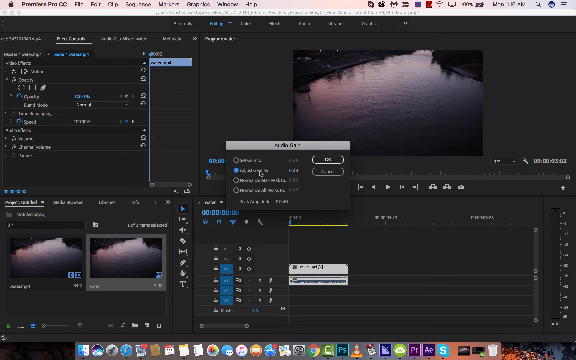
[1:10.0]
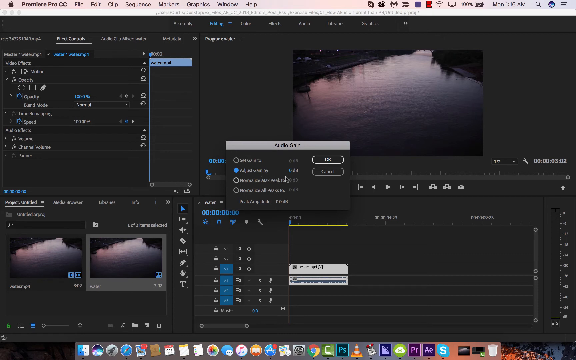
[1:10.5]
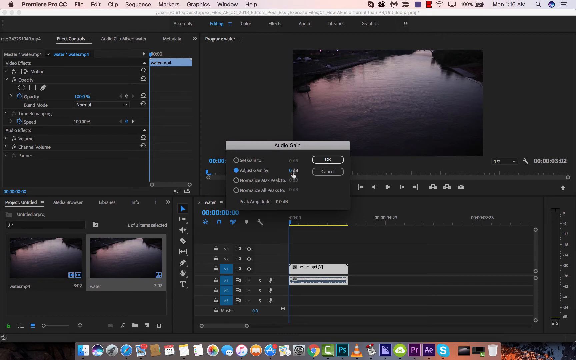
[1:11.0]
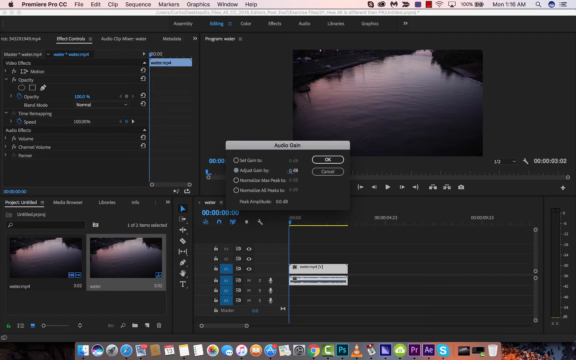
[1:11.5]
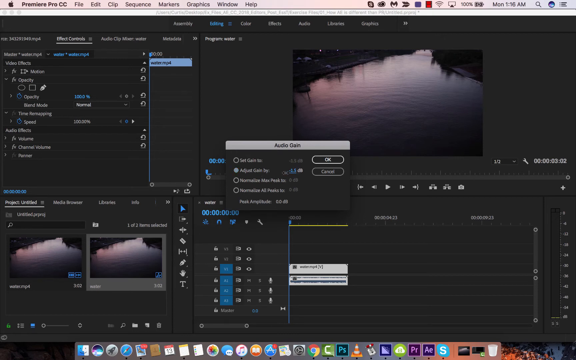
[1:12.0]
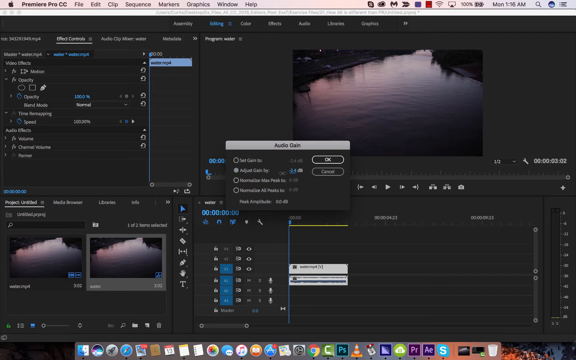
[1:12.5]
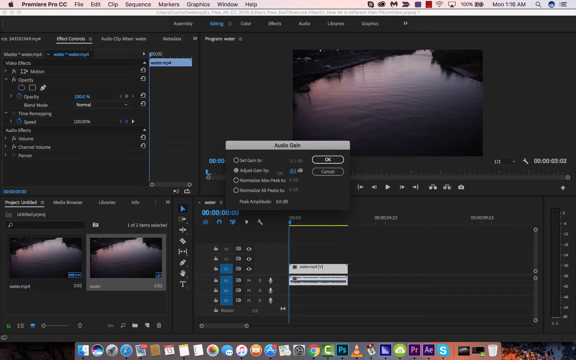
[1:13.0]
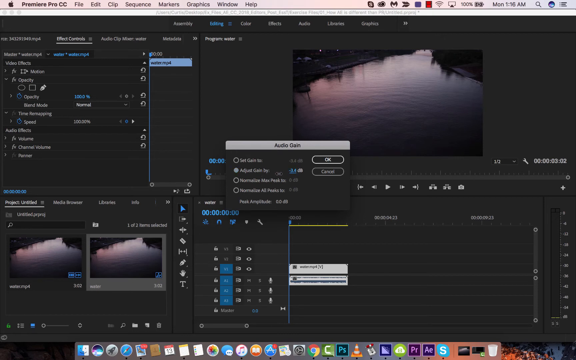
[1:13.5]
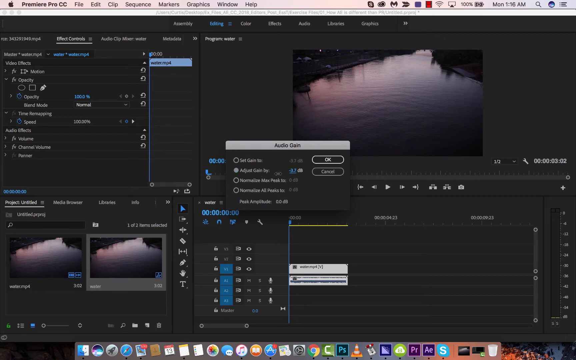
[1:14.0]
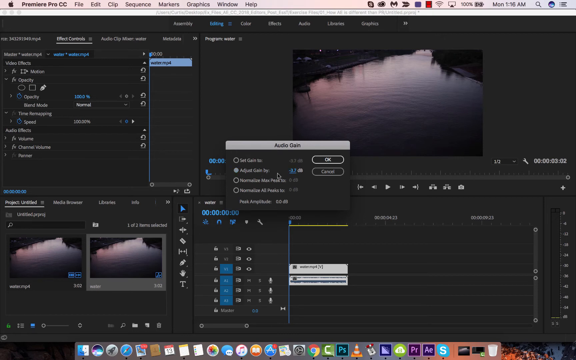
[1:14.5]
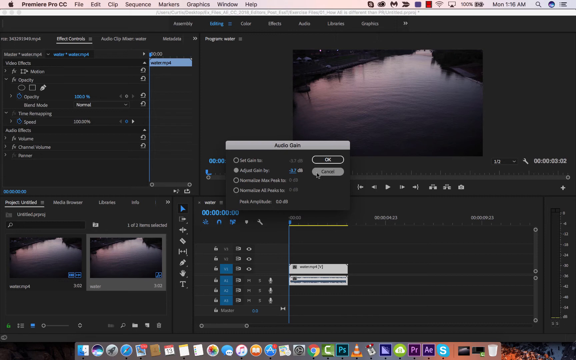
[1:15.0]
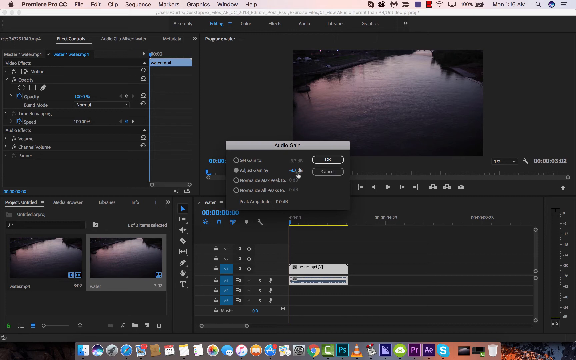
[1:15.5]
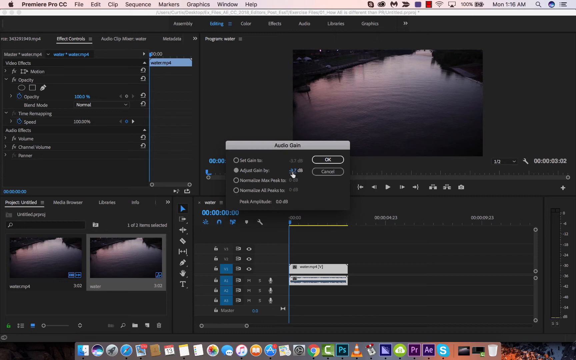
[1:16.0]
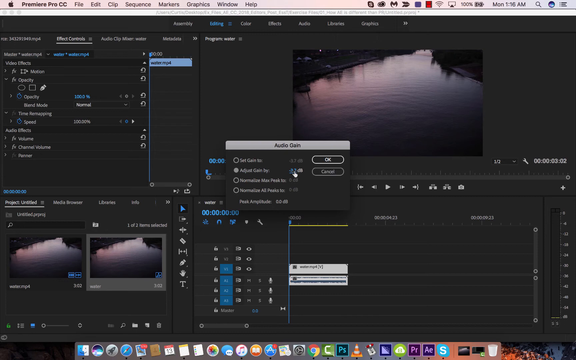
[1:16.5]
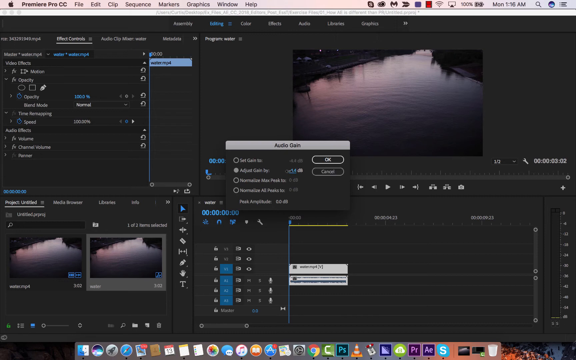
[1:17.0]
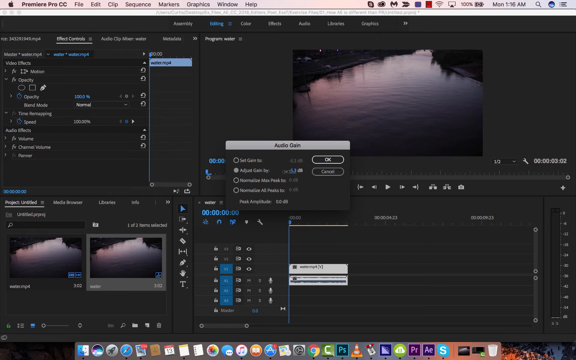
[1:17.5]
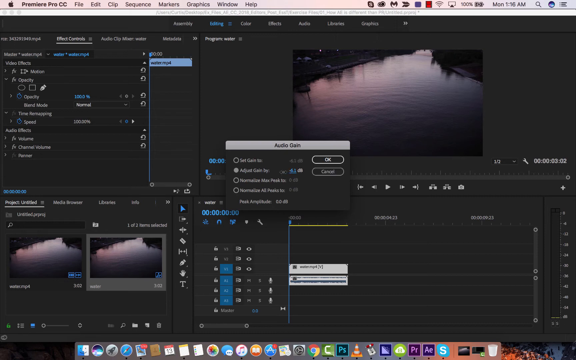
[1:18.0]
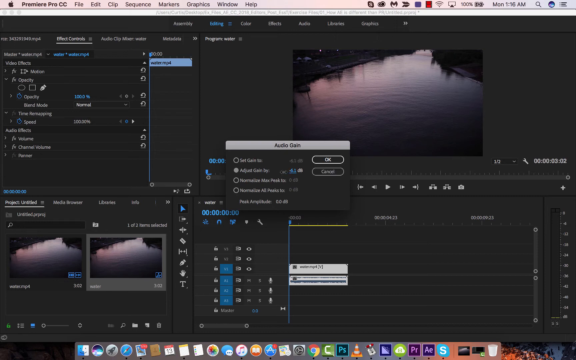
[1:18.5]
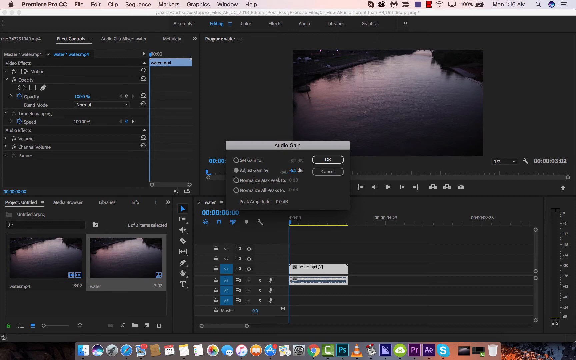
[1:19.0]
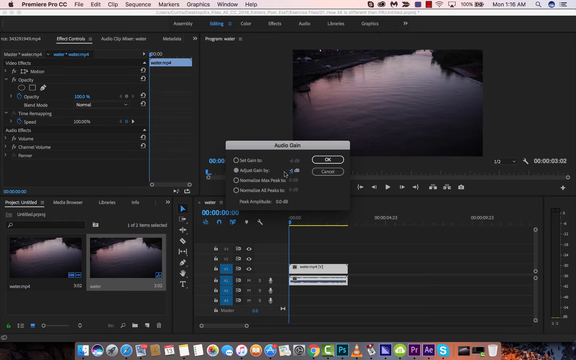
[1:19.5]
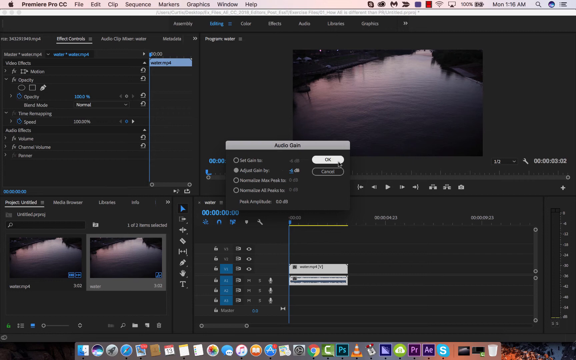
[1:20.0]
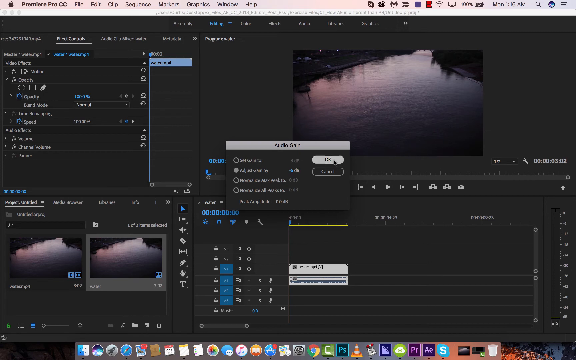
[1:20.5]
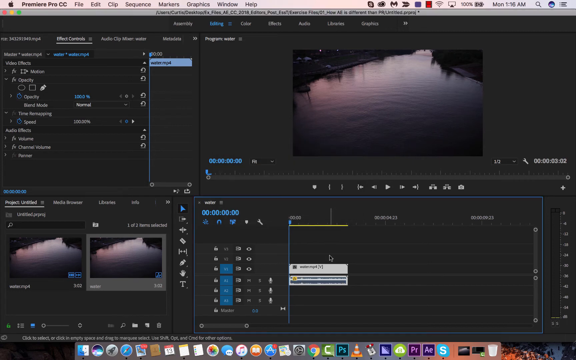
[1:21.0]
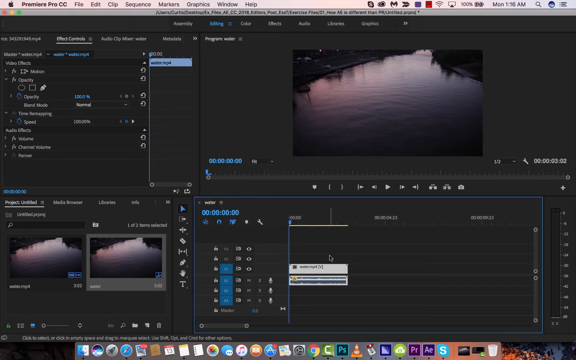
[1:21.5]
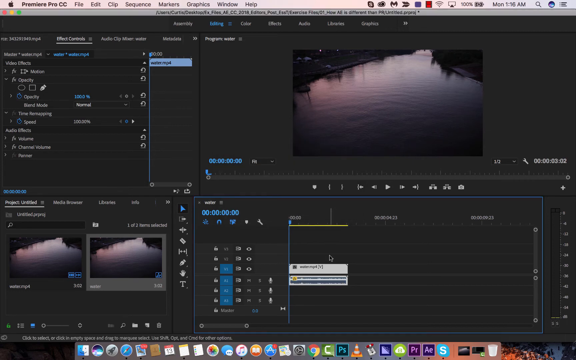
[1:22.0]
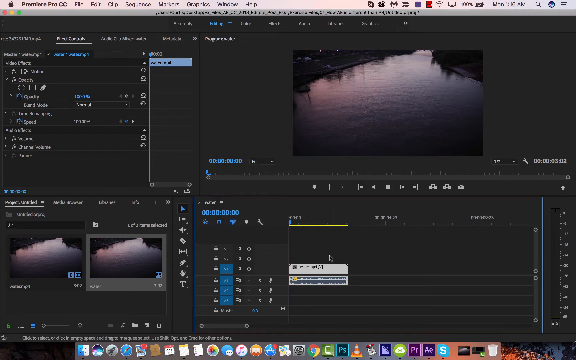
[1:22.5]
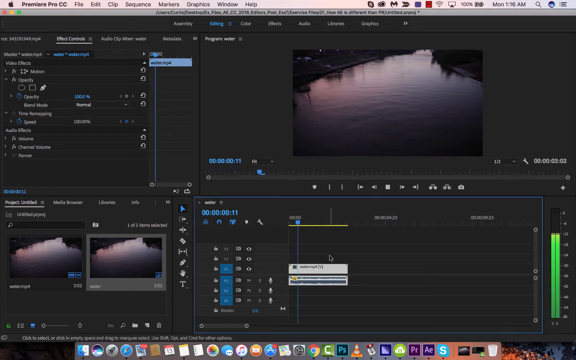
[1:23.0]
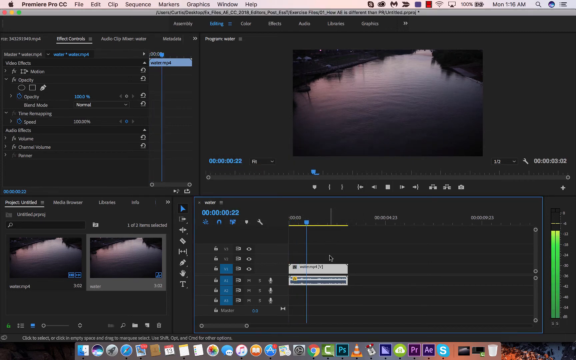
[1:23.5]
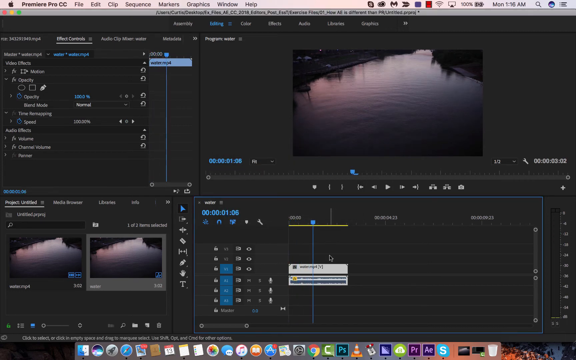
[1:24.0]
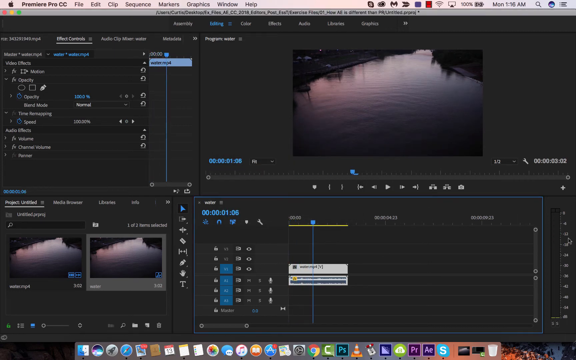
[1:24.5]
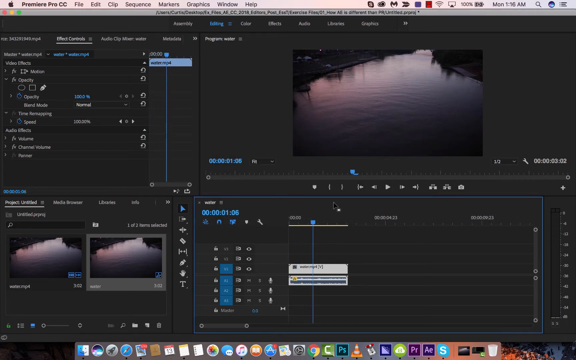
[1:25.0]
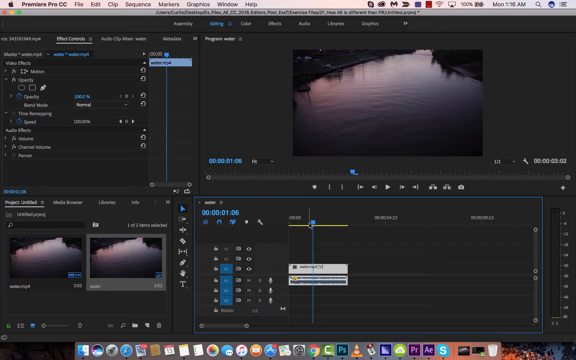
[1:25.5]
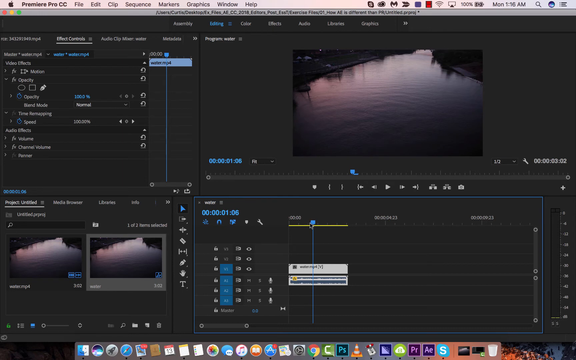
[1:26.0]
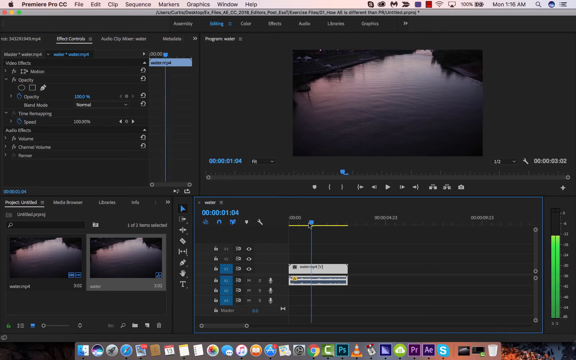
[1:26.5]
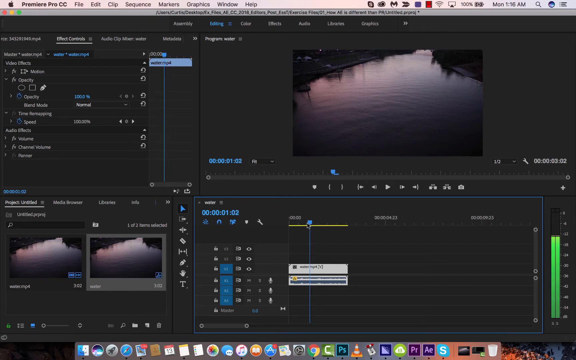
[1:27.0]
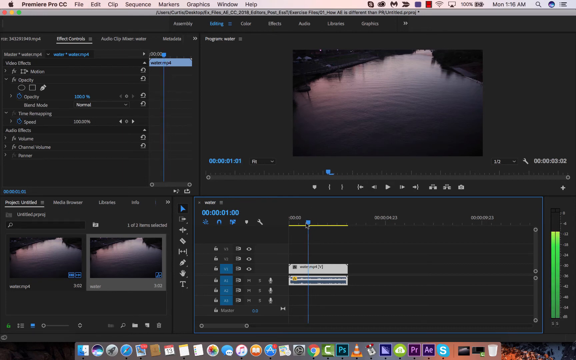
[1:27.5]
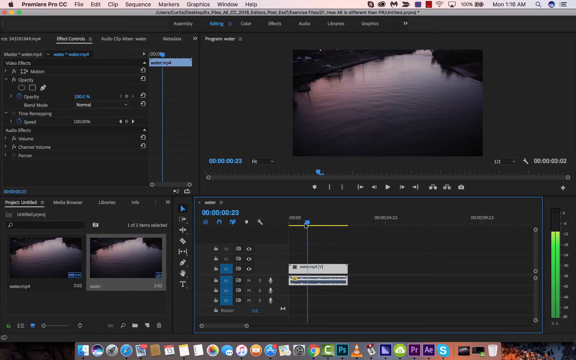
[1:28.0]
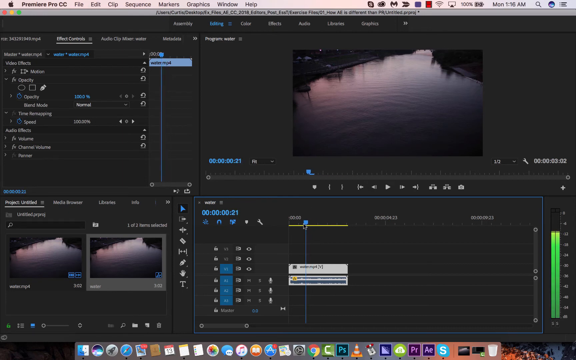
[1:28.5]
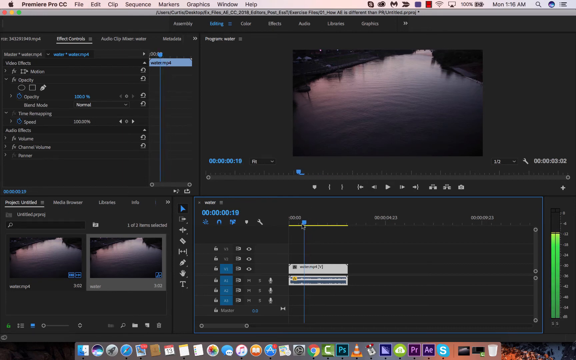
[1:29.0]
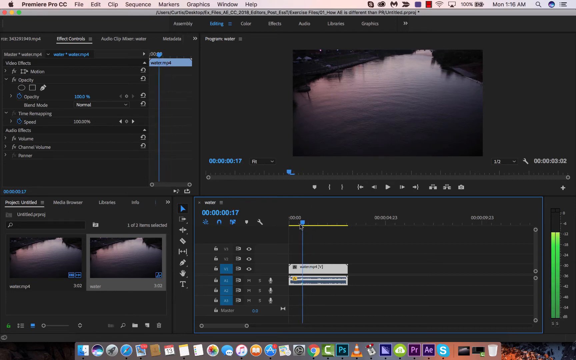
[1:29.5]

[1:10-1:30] The frame is a little wider than it is tall and appears to show a program open on someone's desktop, seemingly some version of macOS given the Apple in the upper left. Right after the Apple it says "Premiere Pro CC". Then come the menus File, Edit, Clip, Sequence, Markers, Graphics, Window and Help, followed by icons and the time and date in the upper right. In the main screen there is a lot of navigation in the upper-left area. In the upper right is an image of a body of water, with what looks like a little land in the upper-left and upper-right corners. It goes from pink to dark blue to gray from upper left to lower right, seemingly reflecting a sunrise or sunset. The lower left holds two more copies of the image. In the middle, the Audio Gain menu appears to be open with the second option selected. The cursor moves over and then back to the left, as if weighing the options, and then OK is clicked. The mouse moves back to the right, apparently adjusting a graph in the lower right.